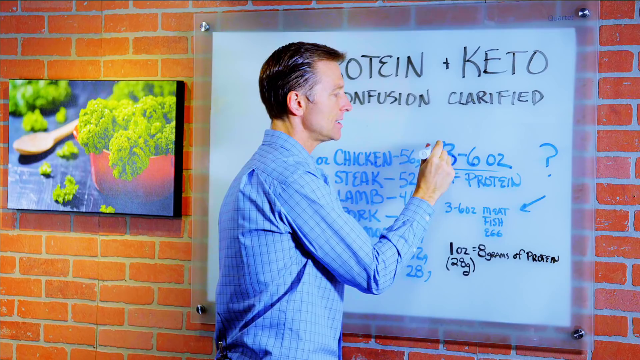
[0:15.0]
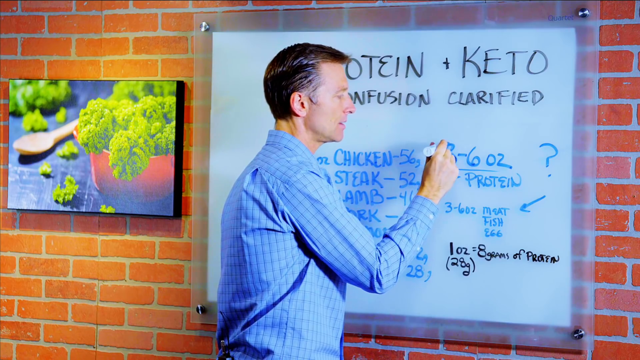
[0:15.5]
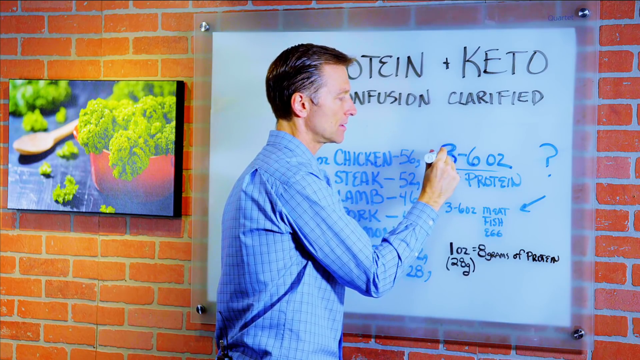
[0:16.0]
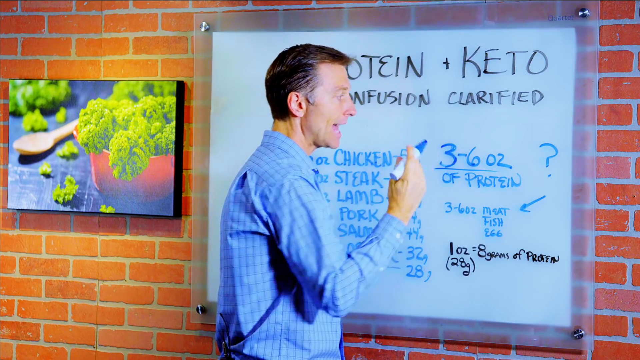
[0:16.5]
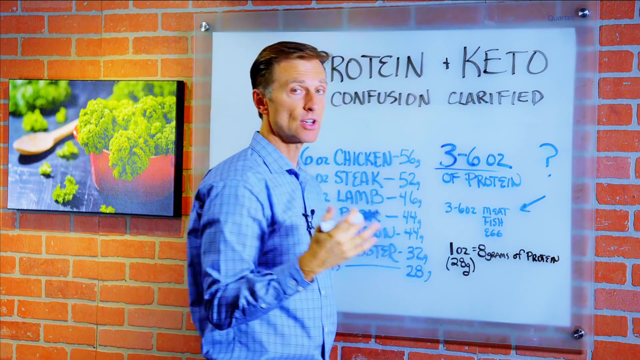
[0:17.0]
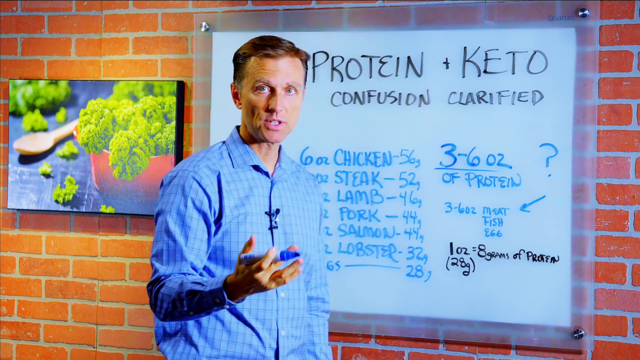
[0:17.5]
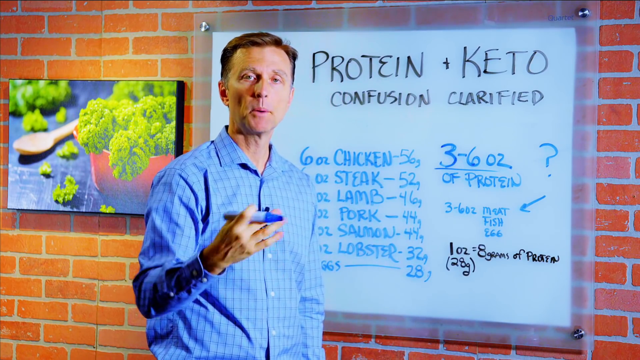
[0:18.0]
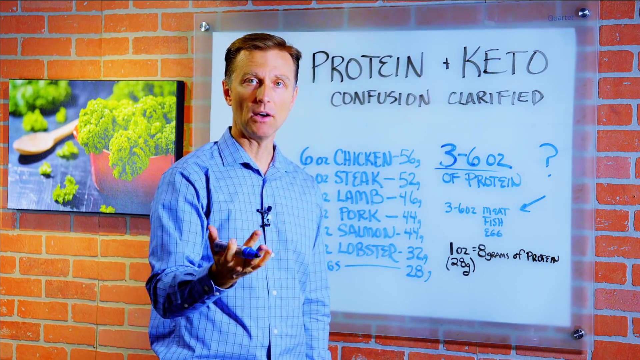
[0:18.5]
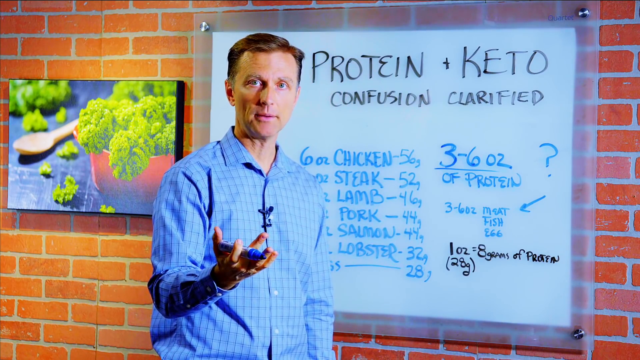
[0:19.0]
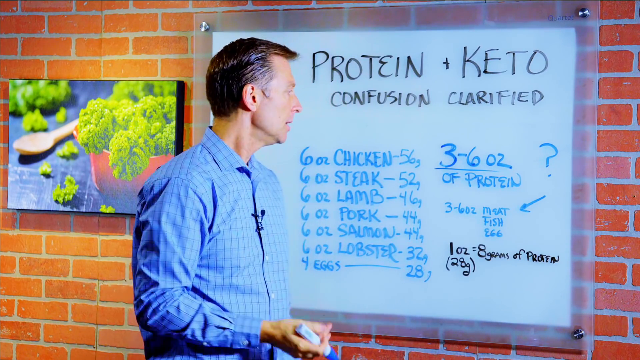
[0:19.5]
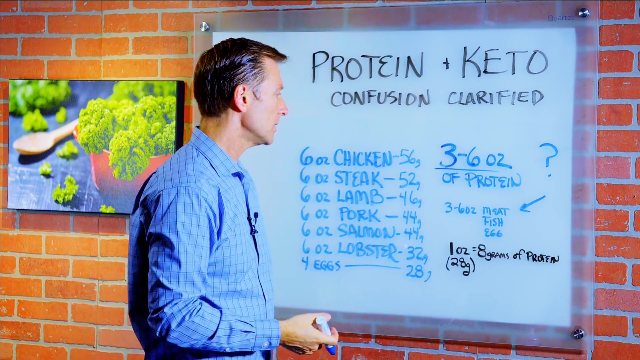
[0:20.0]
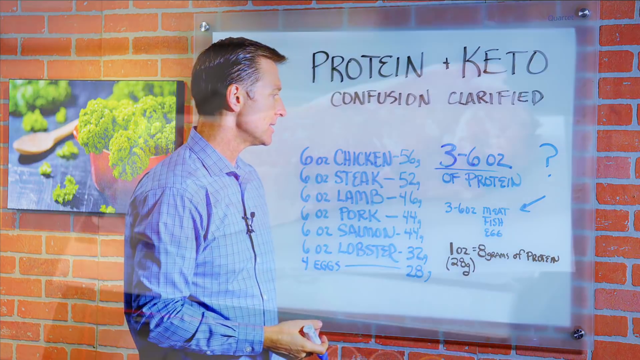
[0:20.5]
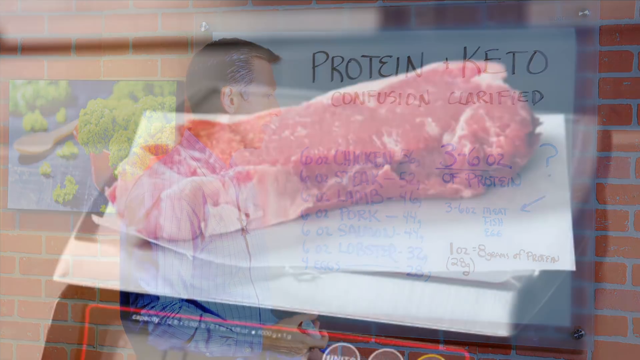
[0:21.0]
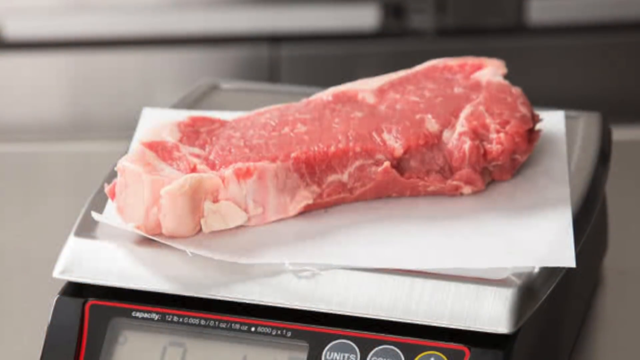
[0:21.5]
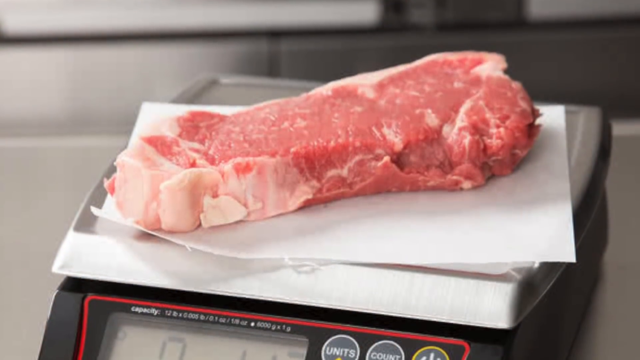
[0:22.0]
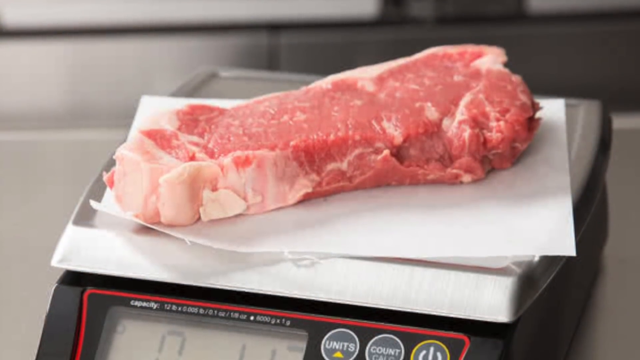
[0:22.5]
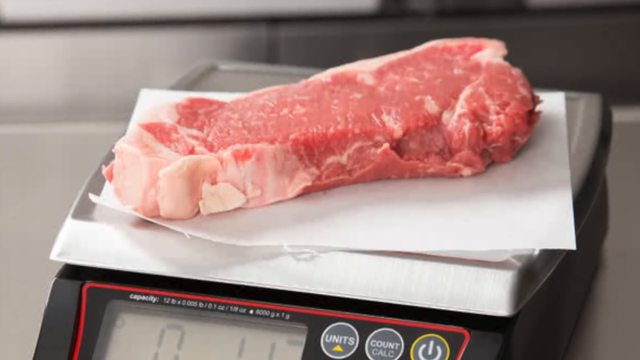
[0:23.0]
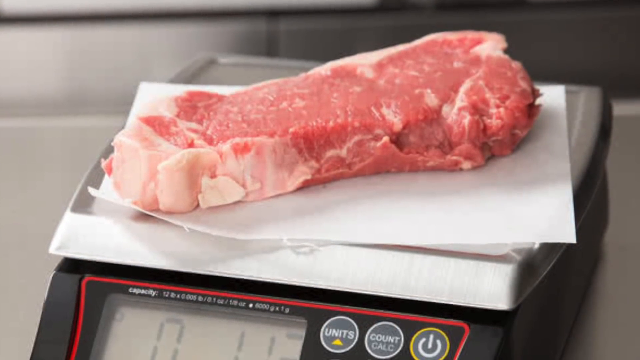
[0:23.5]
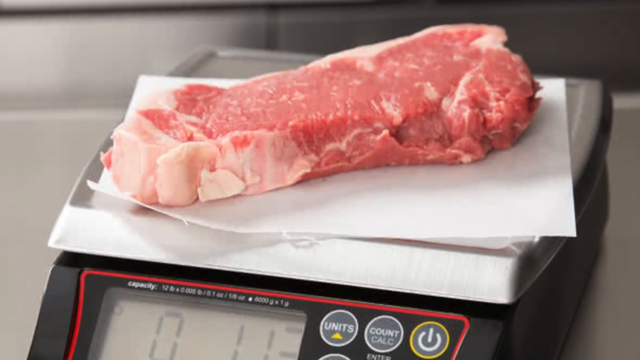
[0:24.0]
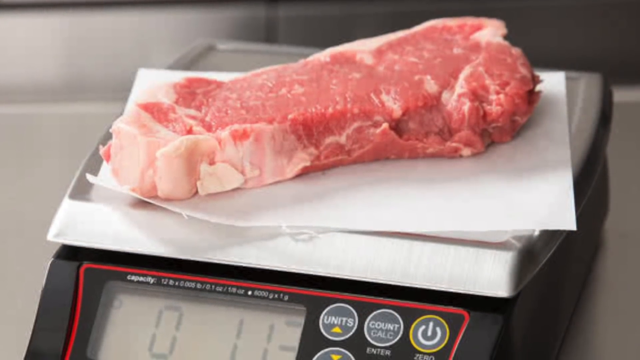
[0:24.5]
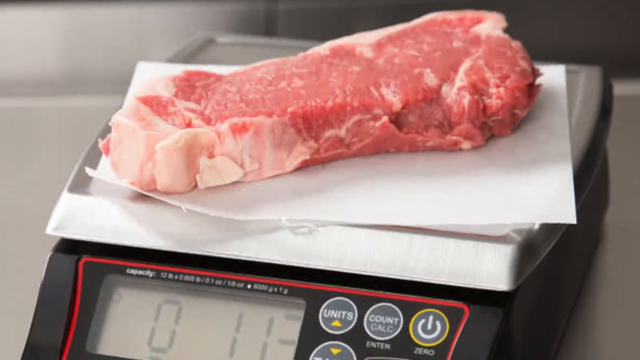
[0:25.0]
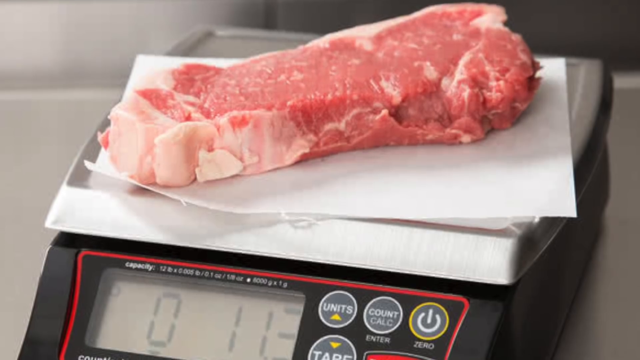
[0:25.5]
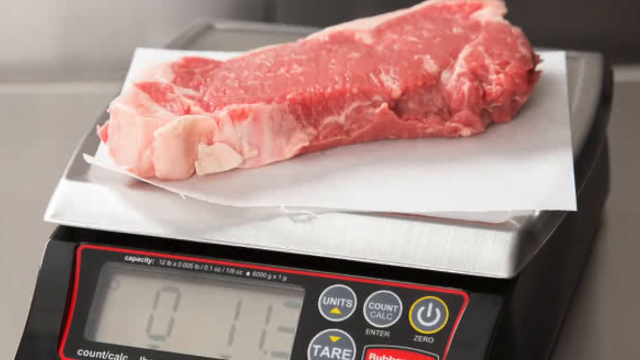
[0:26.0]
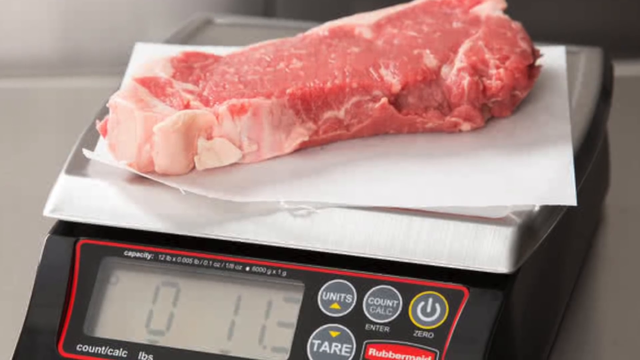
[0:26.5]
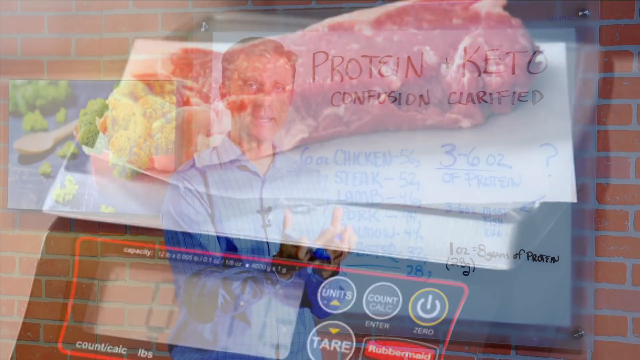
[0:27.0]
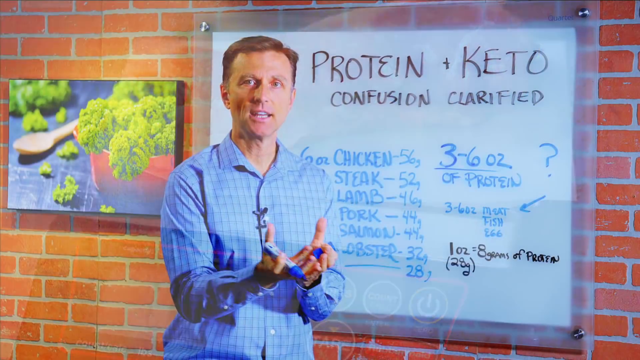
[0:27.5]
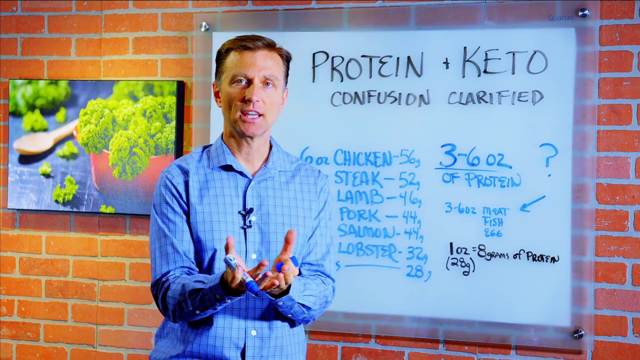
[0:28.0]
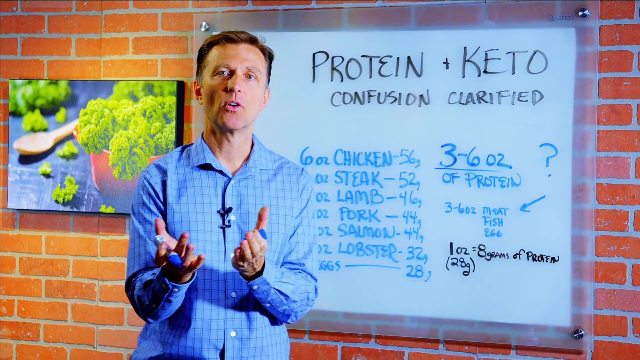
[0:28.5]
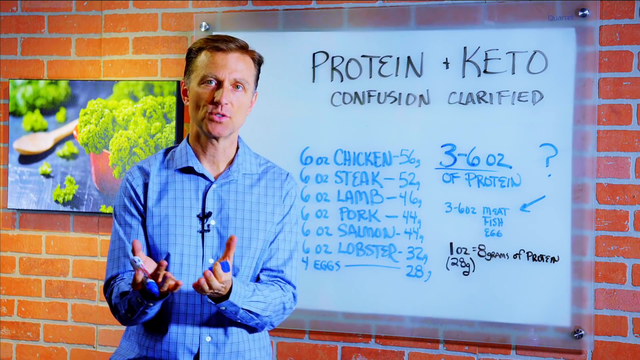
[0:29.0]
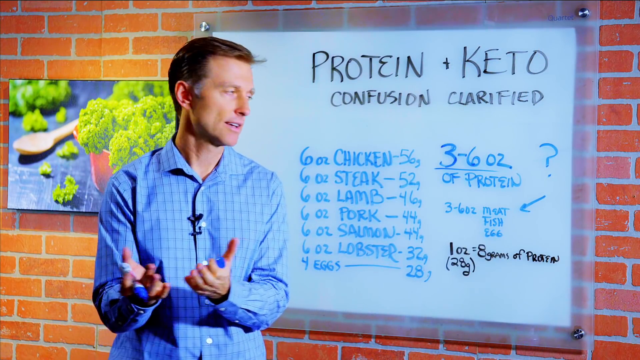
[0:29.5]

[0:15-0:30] The man puts the marker on the board and draws a line underneath a portion of text. He pulls his hands back and continues explaining his points with his hands, facing the camera. The shot changes to a piece of raw beef on a piece of wax paper on a food scale, with a reading on the digital screen below. The food scale is on a metal table, not in a kitchen setting. The camera pans across the meat as if showing the display and the resulting weight, then pulls back out to the man at the whiteboard. He draws over certain portions of the text in blue marker as though emphasizing them, continues to explain with his hands, and steps all the way to the right of the frame so he is standing in front of the portrait of leafy vegetables. He then draws over the number three on the whiteboard while pointing to the text below it.